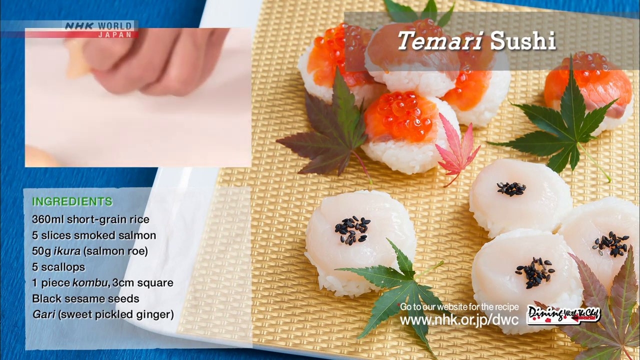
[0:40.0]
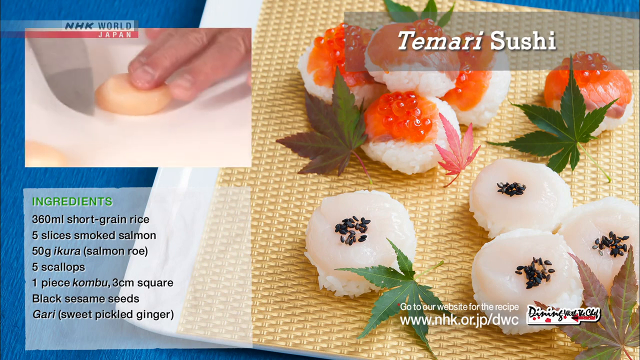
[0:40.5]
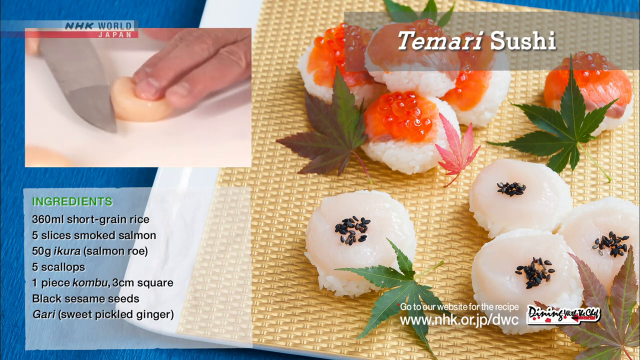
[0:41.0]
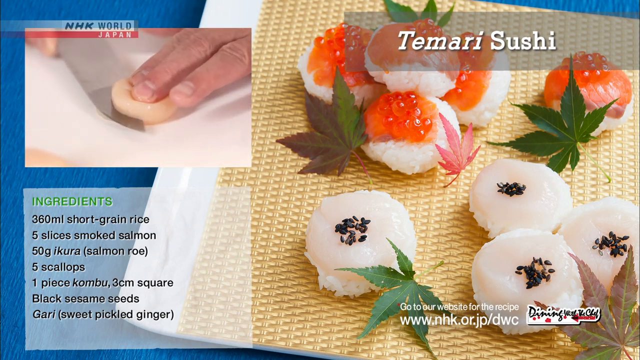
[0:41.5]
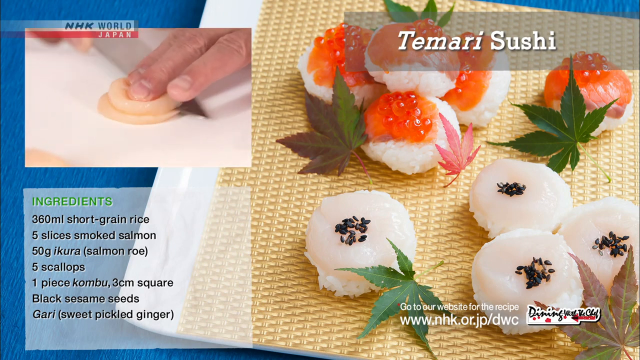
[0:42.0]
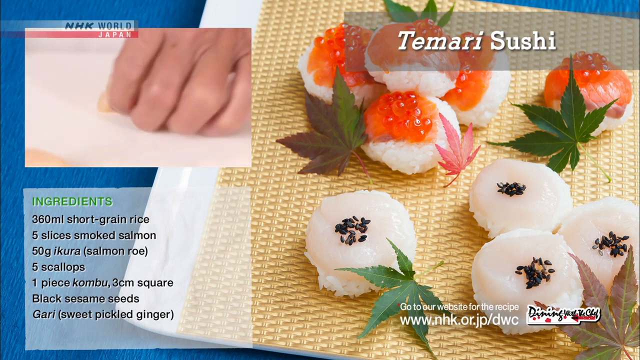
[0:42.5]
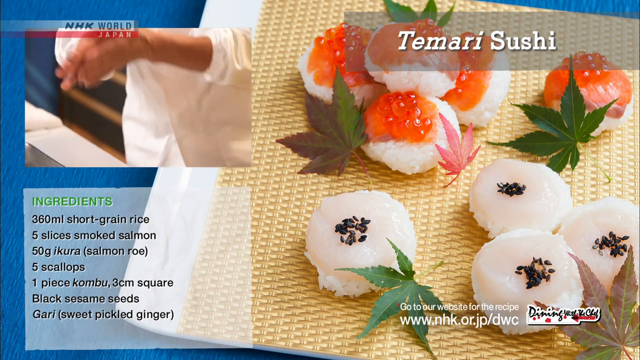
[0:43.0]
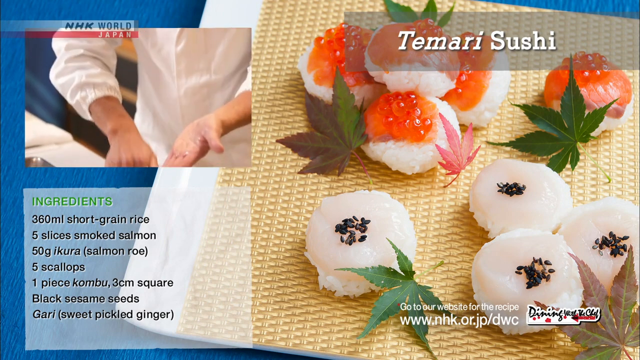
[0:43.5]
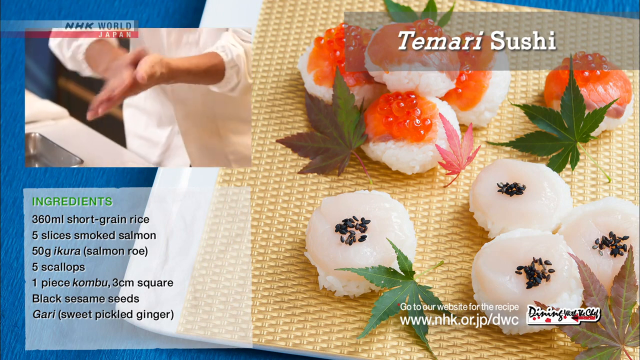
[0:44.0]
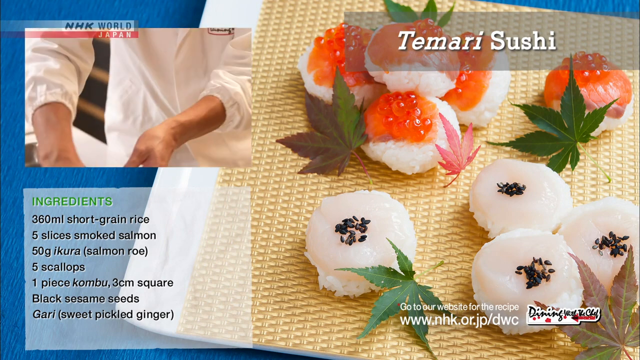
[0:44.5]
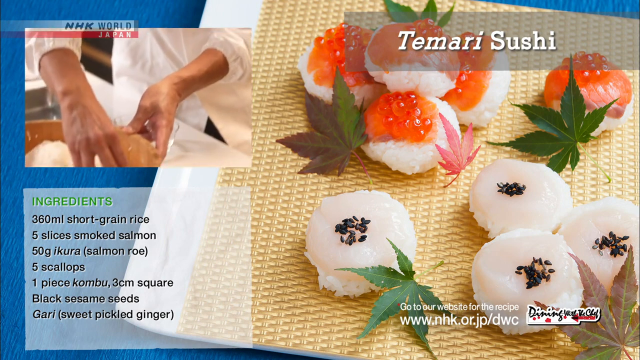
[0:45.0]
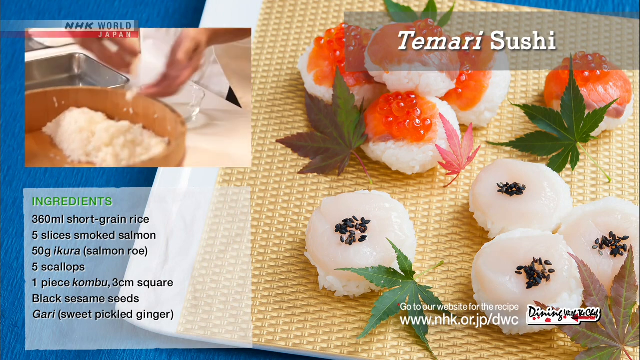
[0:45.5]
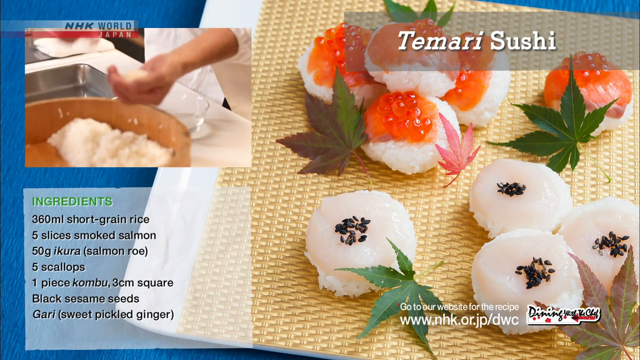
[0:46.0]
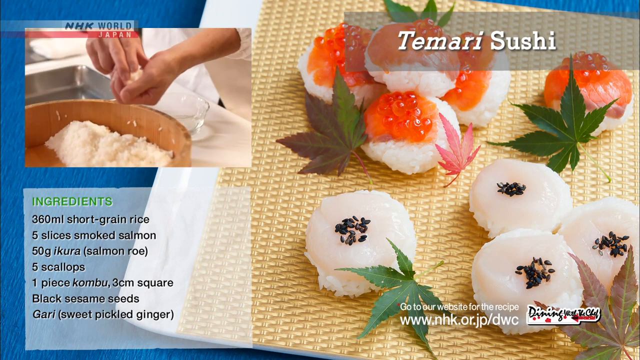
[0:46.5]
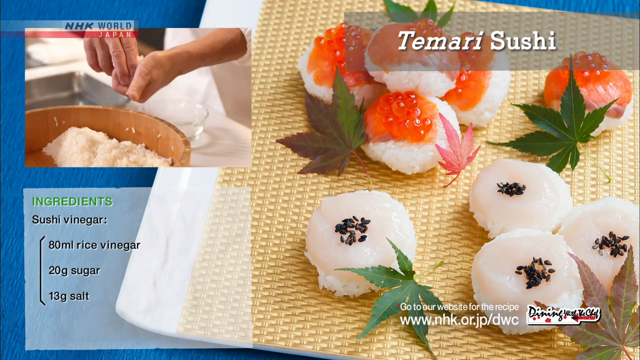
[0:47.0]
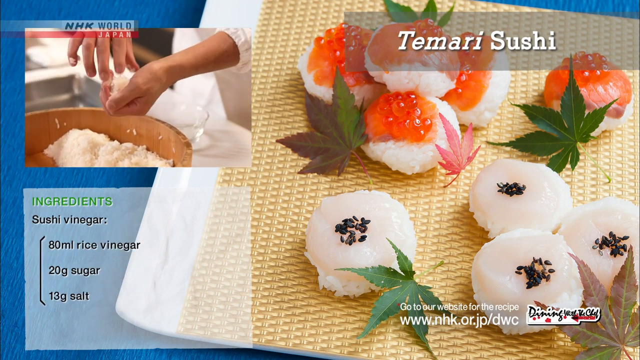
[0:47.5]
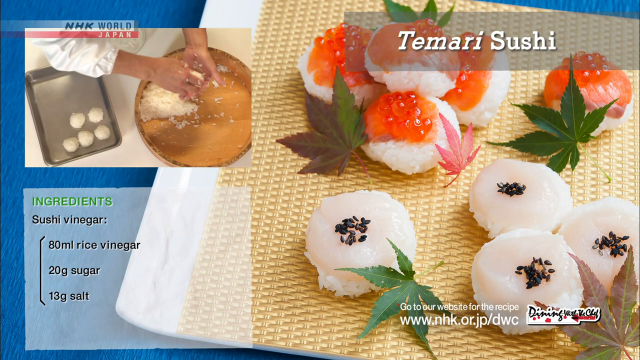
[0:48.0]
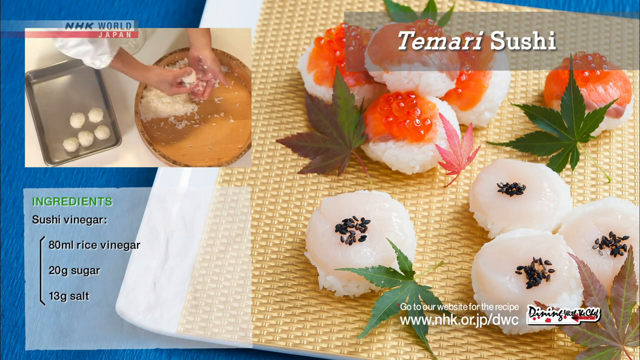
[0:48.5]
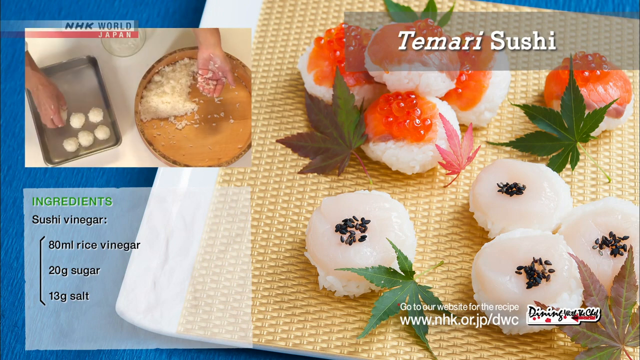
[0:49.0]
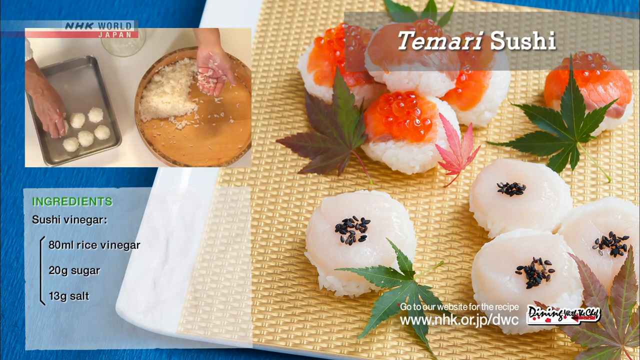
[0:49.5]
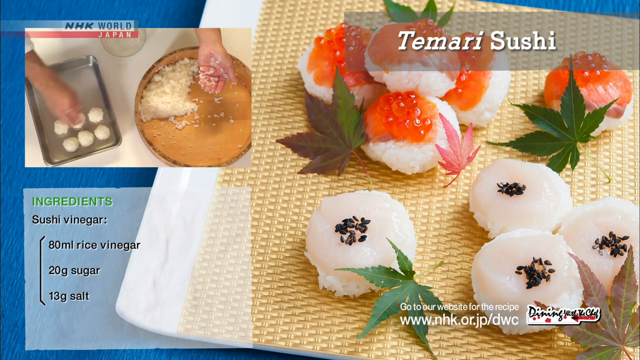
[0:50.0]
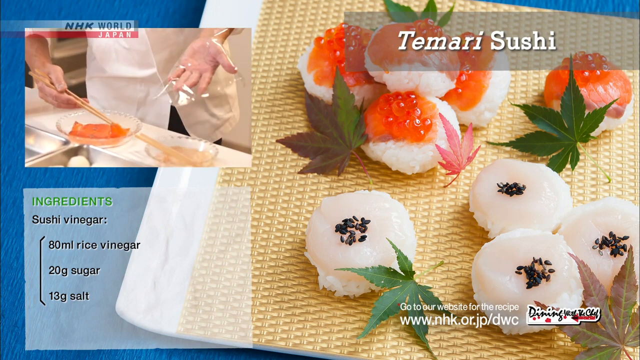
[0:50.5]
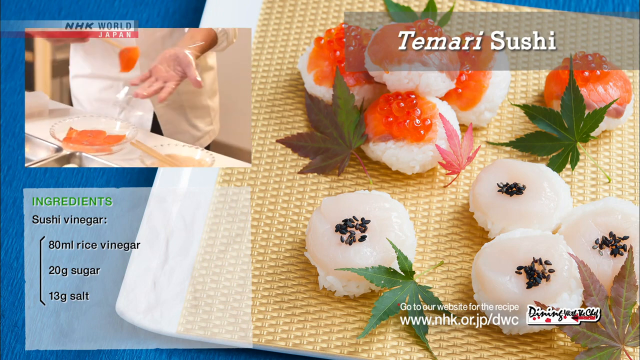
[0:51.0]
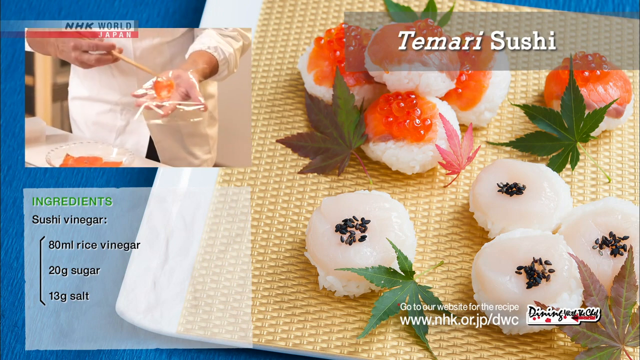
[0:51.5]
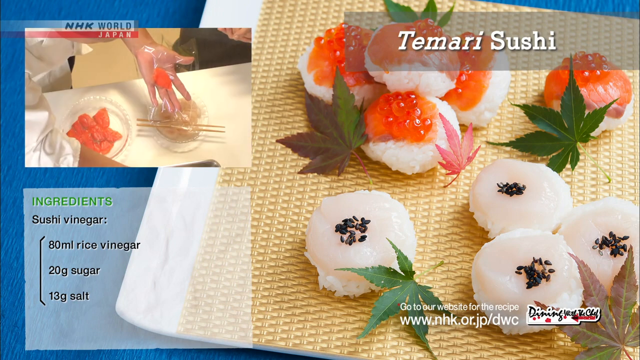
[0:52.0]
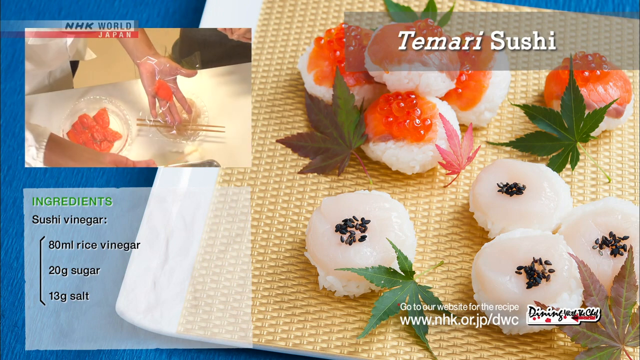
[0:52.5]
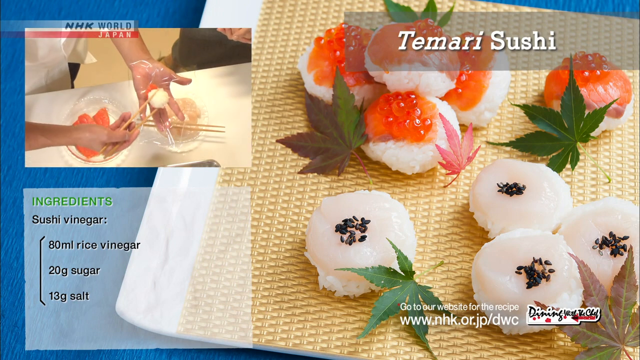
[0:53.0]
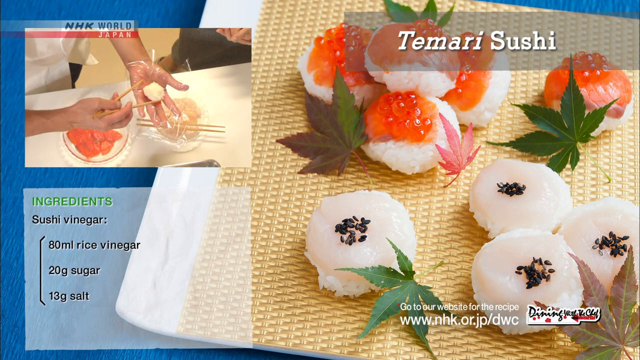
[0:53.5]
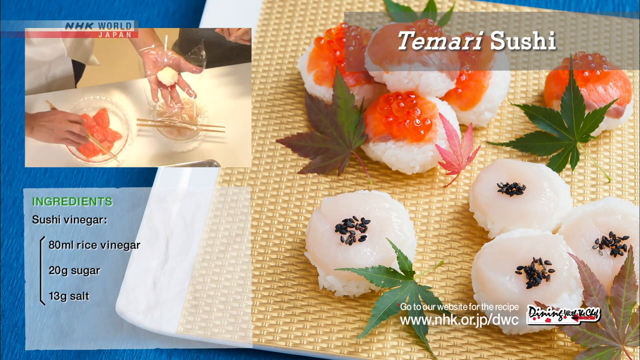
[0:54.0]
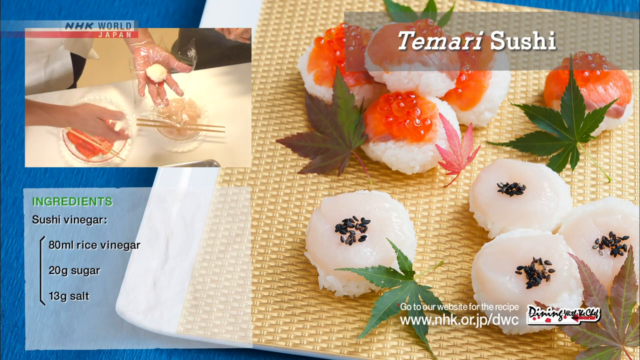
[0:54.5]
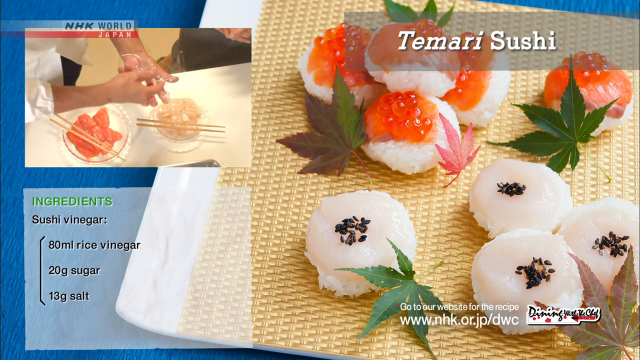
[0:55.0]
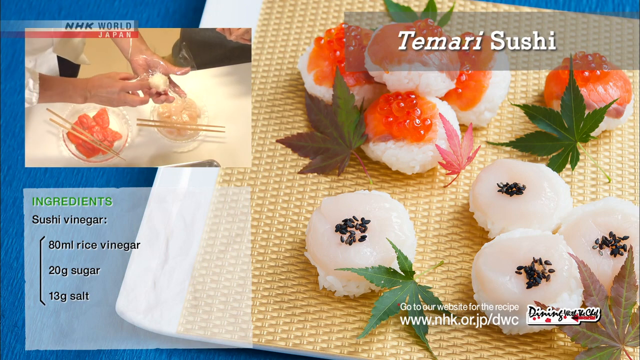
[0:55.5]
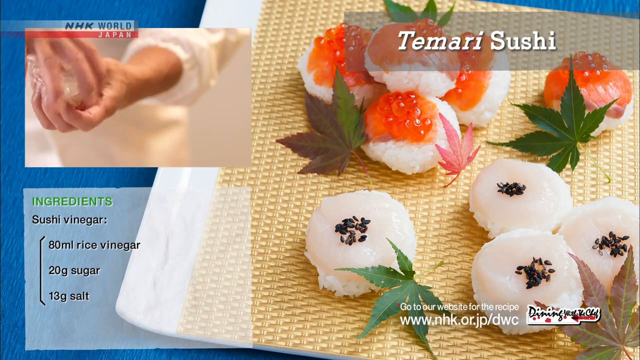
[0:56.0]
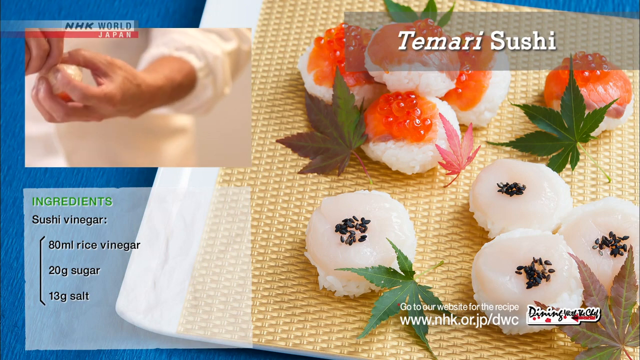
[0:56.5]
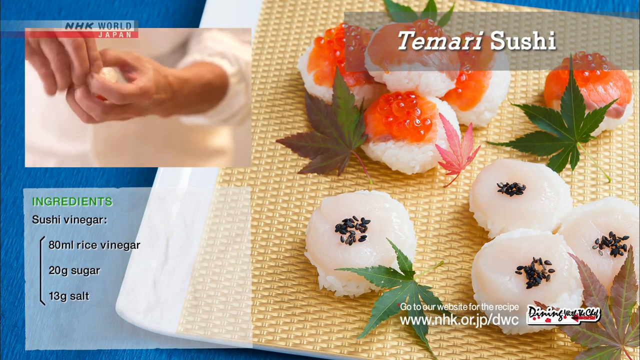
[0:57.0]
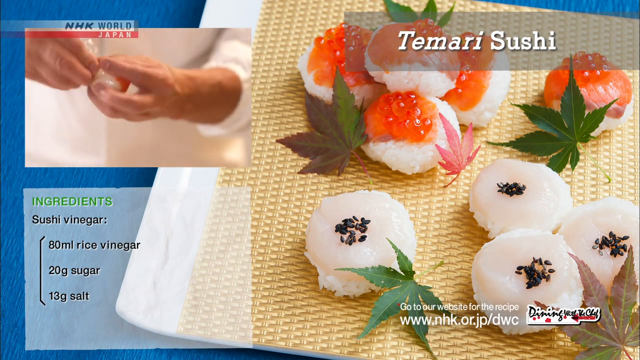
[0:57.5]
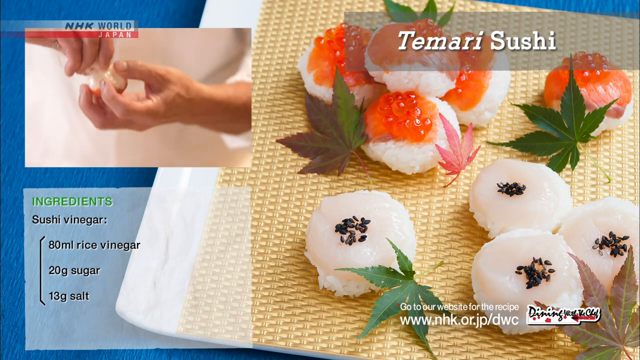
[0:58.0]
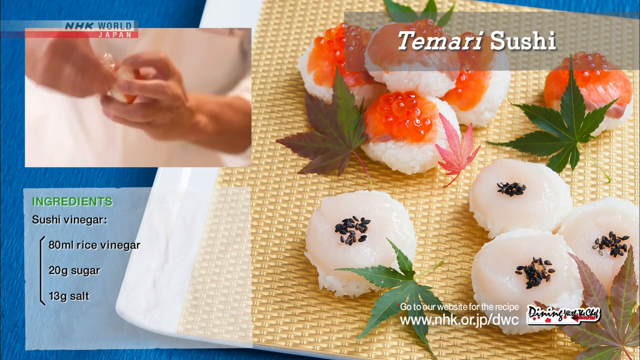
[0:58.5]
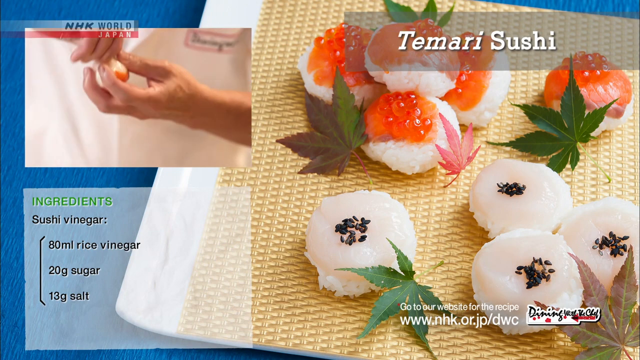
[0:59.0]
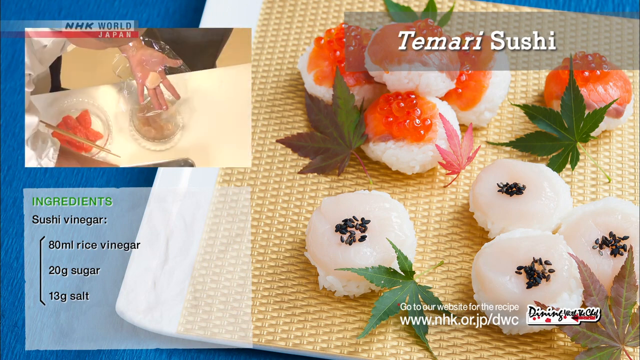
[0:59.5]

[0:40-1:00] The tamari sushi remains on the right-hand side of the screen: one is a ball of white rice with smoked salmon and salmon roe on top, and the other is a ball of white rice with a piece of scallop and black sesame seeds on top. An ingredient list on the bottom left-hand side reads "Ingredients" followed by 360ml short grain rice, 5 slices smoked salmon, 50g of ikura or salmon roe, 5 scallops, 1 piece of kombu or a 3cm square, black sesame seeds, and sweet pickled ginger. The video in the top left-hand corner continues showing how to make the tamari sushi. A chef cuts thin slices out of the scallops. He then rolls balls of the rice in his hand, making equal-sized balls and putting them on a plate. With a piece of plastic wrap on his hand, the chef places a piece of the salmon, puts a ball of rice on top, then covers the ball with the plastic wrap and twists it into a knot.